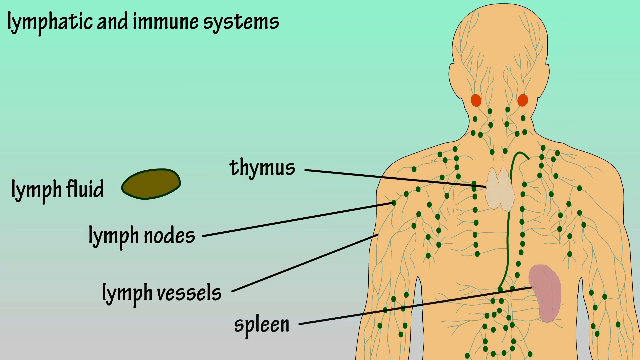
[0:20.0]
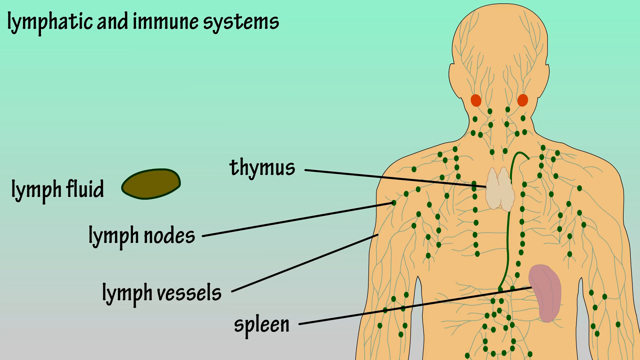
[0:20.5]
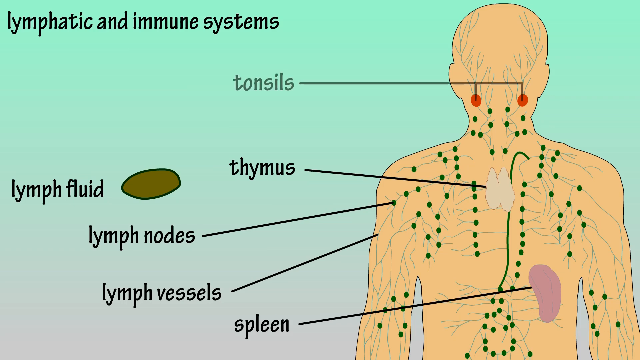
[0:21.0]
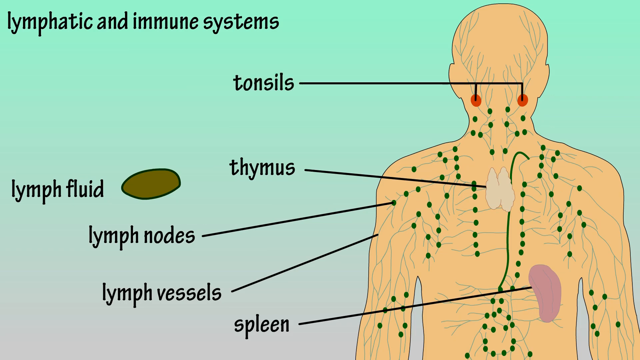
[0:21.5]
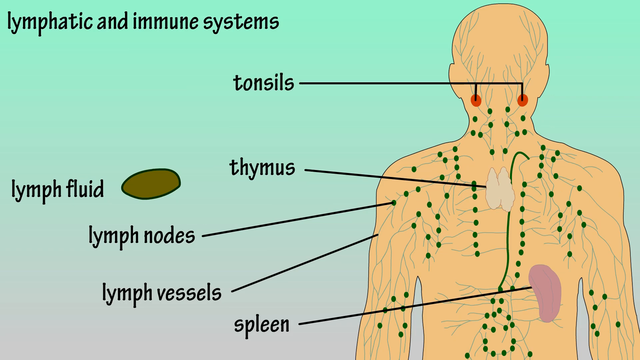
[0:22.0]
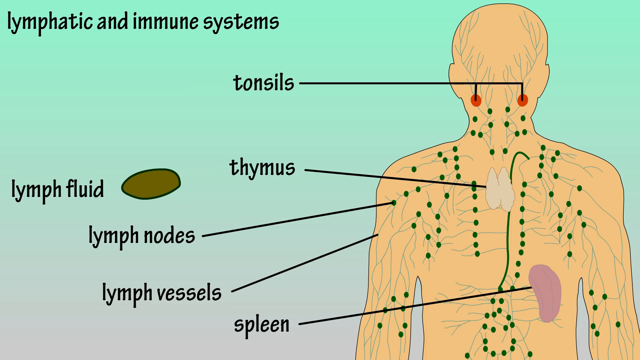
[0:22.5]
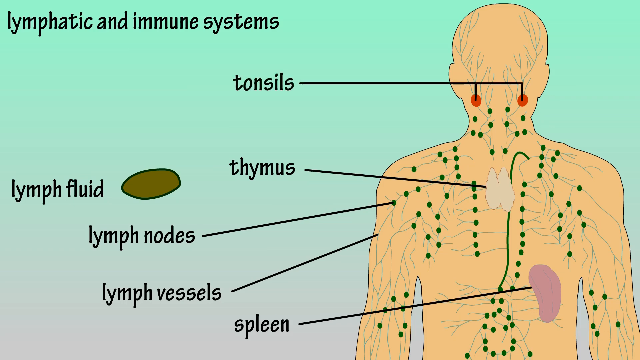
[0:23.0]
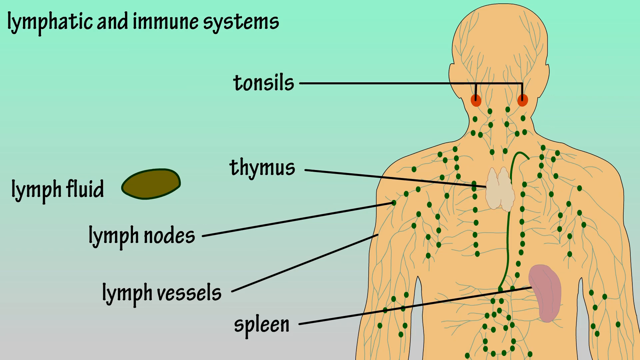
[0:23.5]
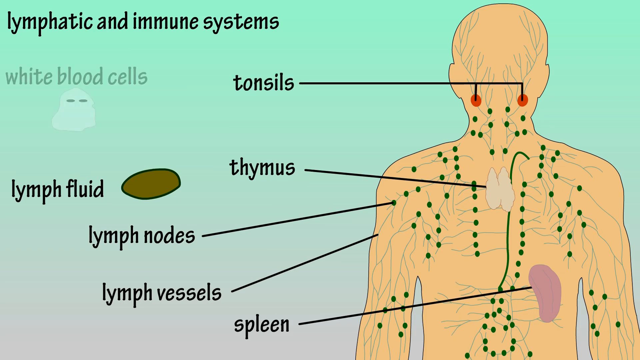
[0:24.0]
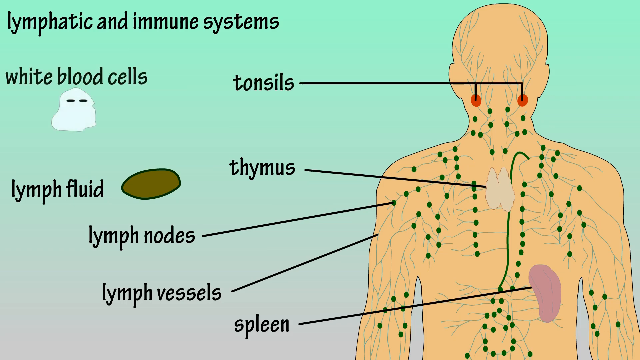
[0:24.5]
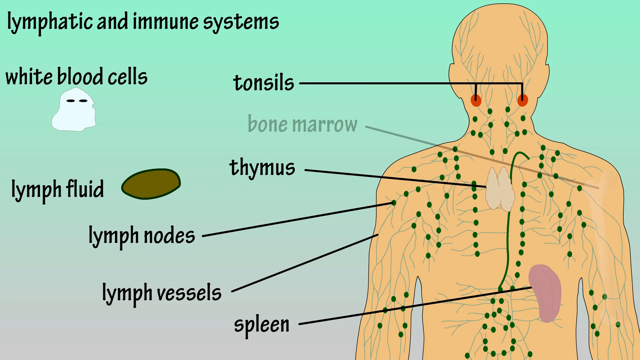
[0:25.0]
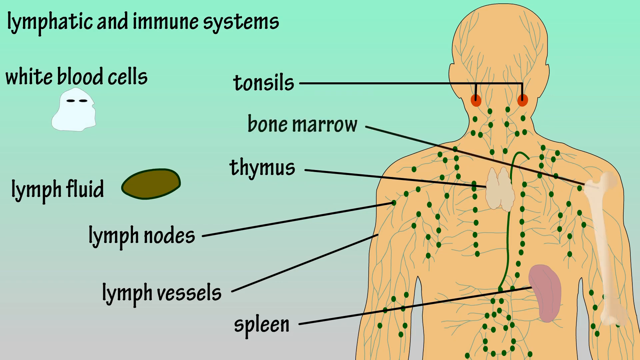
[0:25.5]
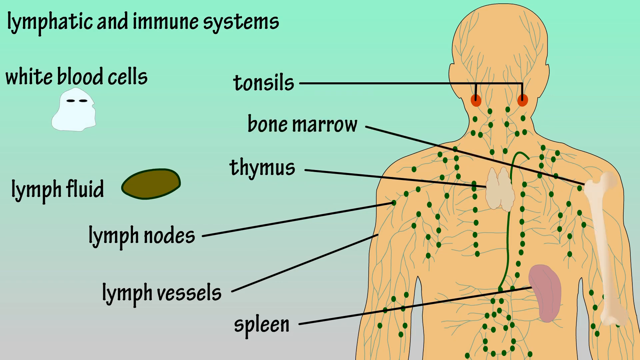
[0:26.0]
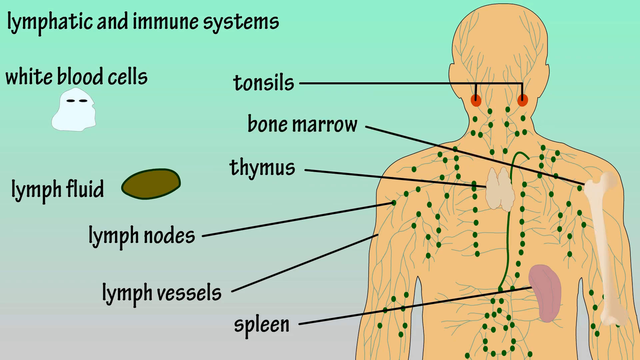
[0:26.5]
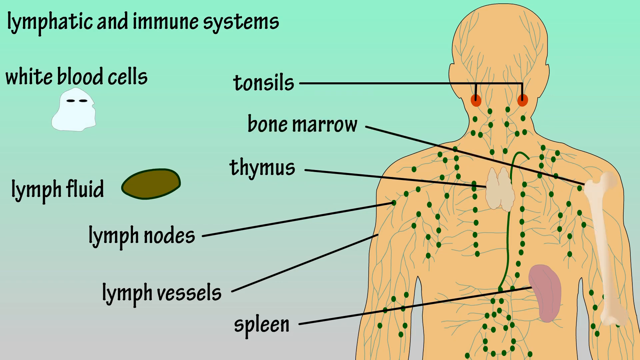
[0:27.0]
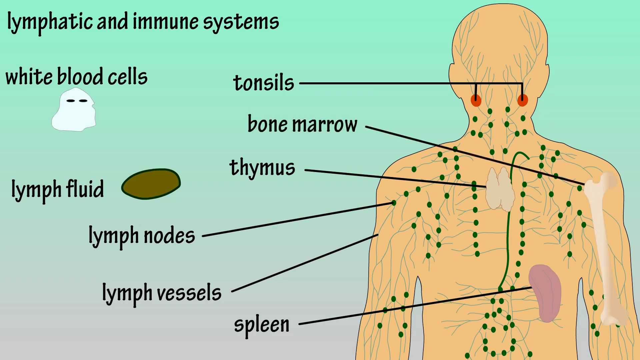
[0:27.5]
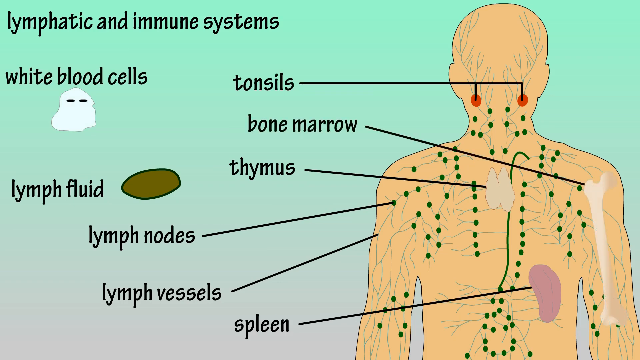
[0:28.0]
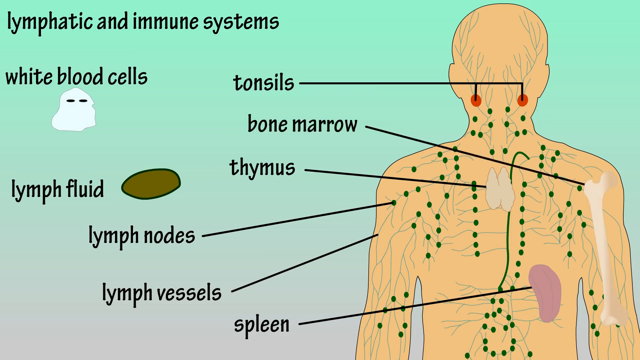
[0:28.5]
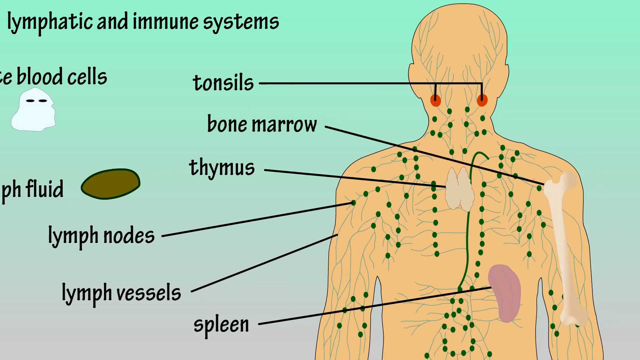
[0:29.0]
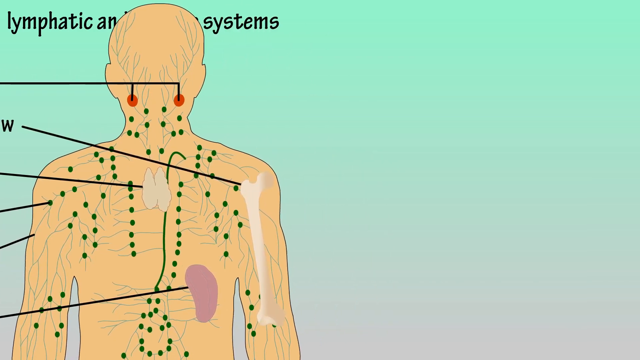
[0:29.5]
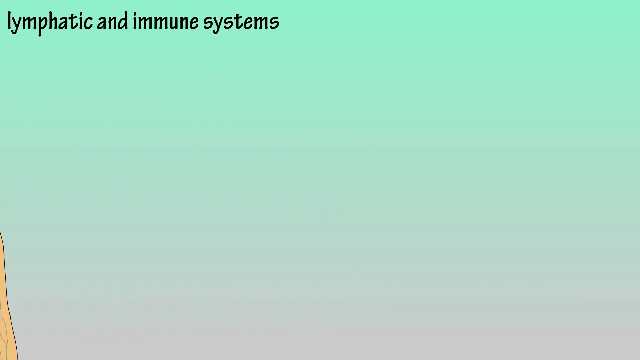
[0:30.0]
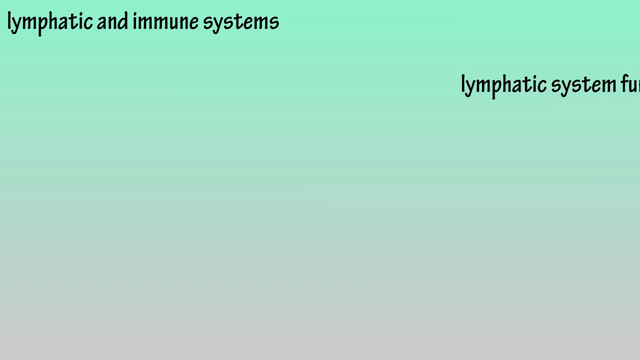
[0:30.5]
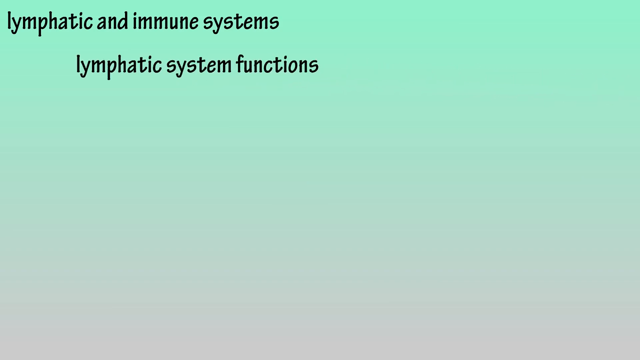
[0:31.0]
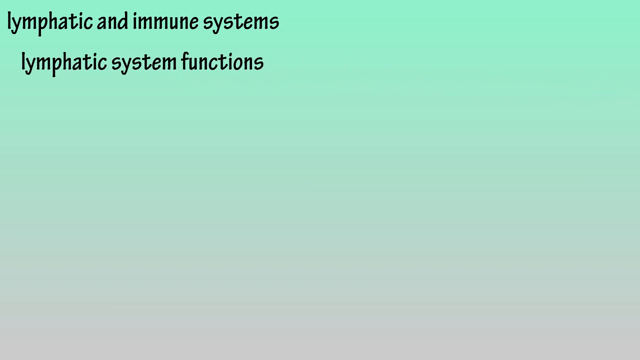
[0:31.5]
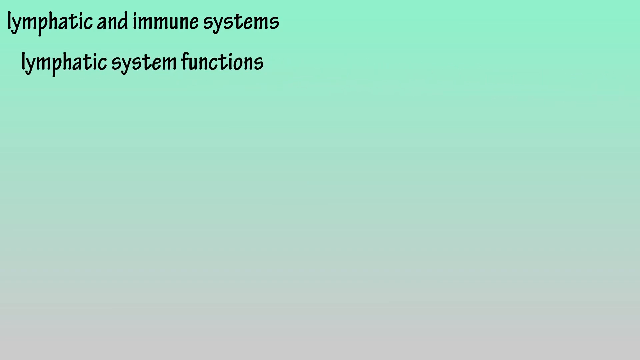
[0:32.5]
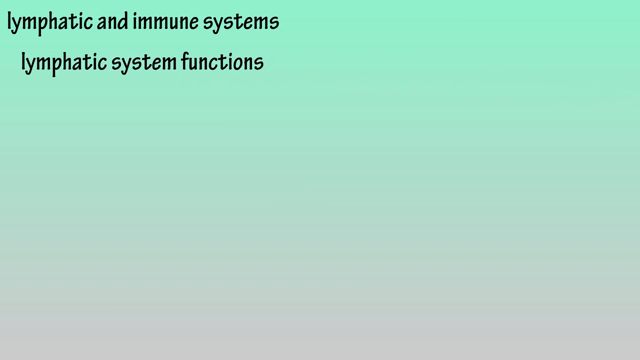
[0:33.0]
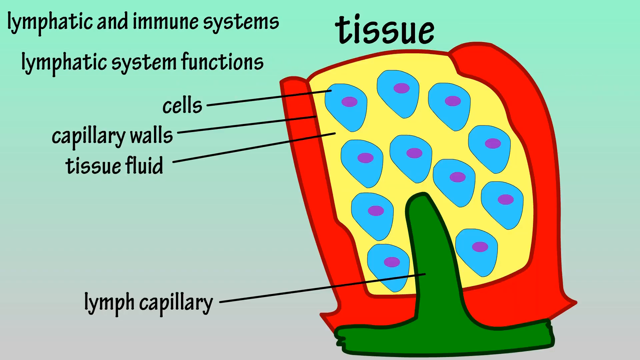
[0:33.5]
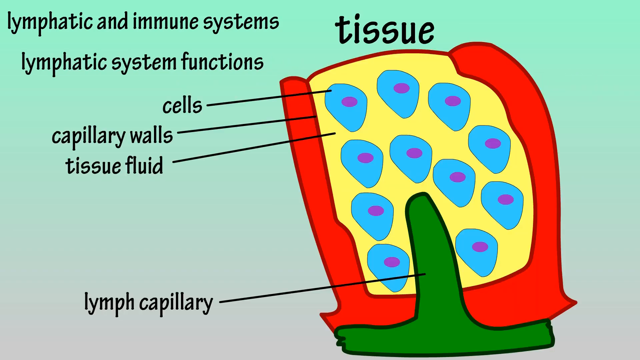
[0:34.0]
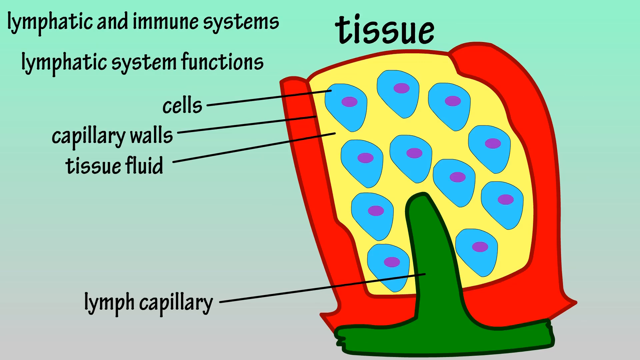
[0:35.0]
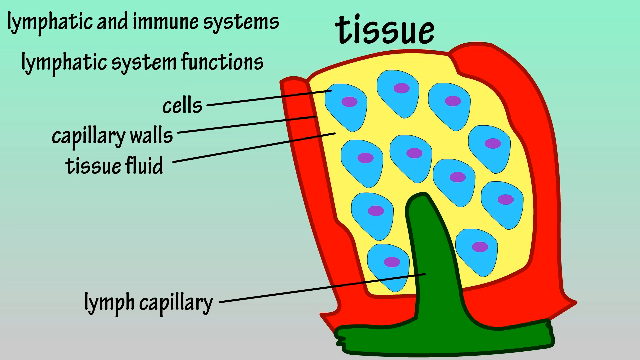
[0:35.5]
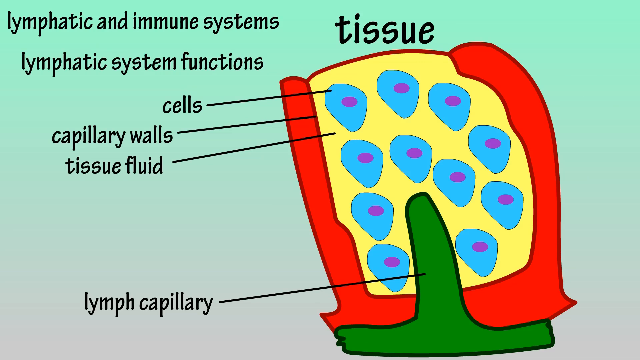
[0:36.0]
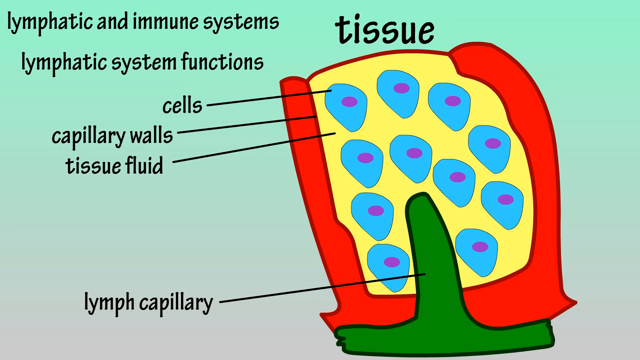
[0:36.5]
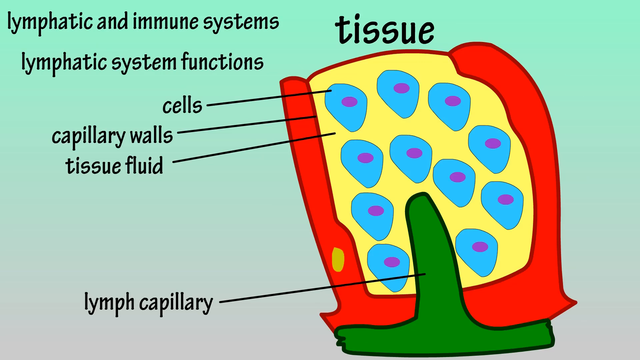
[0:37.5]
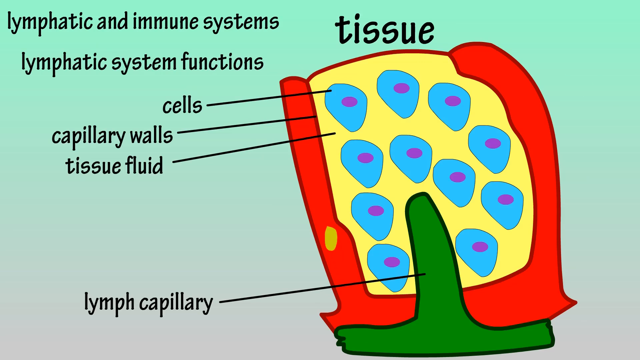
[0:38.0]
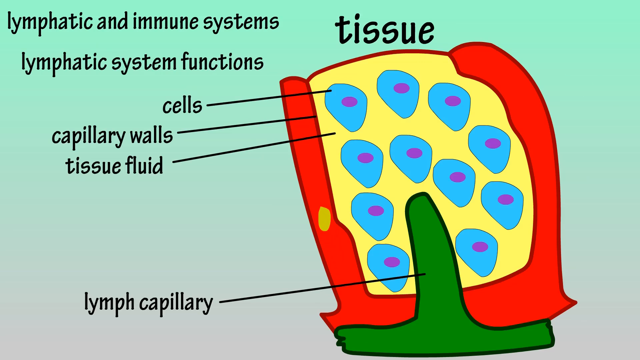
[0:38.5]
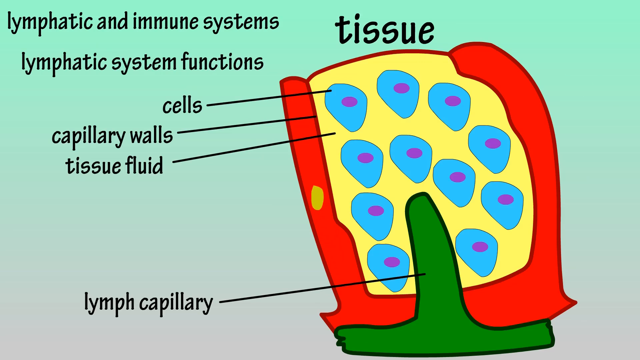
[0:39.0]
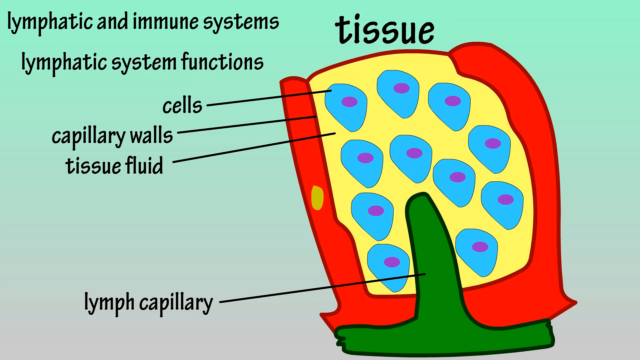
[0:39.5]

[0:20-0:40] A purple spleen appears, with a line leading to it from its text. Two tonsils, shown as two red circles, are also marked by a line. On the left part of the image are white blood cells, with an image like a ghost below the text. Bone marrow is marked on the right side of the person's body, also with a line leading to it. Next, the whole body disappears and, below "lymphatic and immune system", the text "lymphatic system functions" appears. An image of tissue then appears, with cells shown as blue cells with a purple dot inside each. Capillary walls are marked by a red wall, tissue fluid is the whole yellow space between the cells, and a lymph capillary is a green thing at the bottom that looks kind of like a hat.